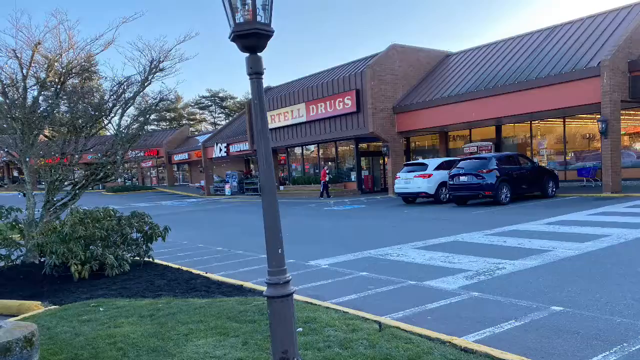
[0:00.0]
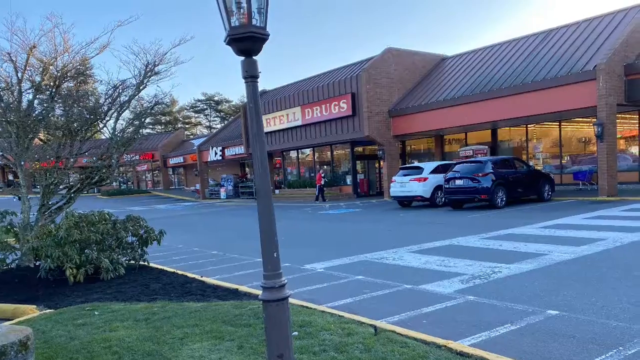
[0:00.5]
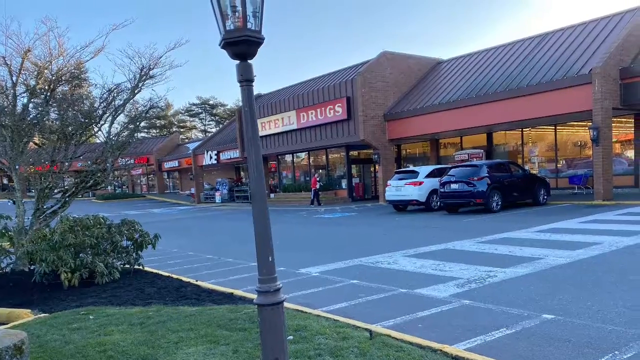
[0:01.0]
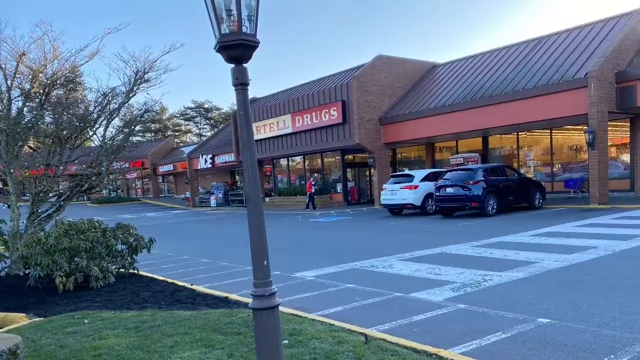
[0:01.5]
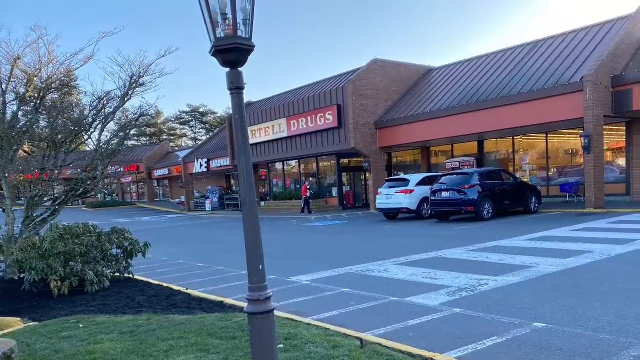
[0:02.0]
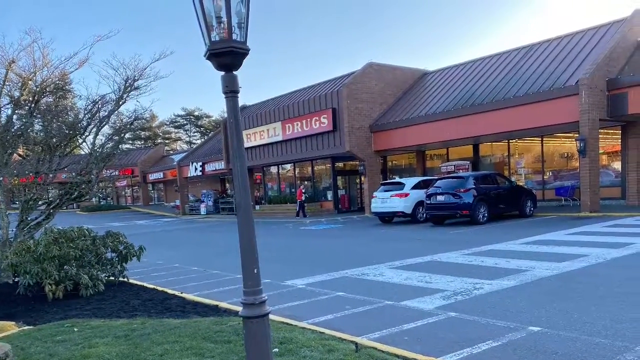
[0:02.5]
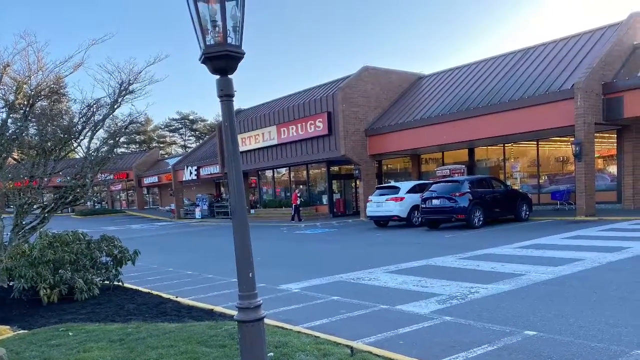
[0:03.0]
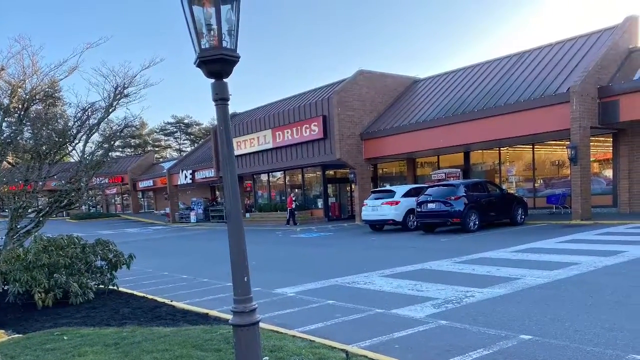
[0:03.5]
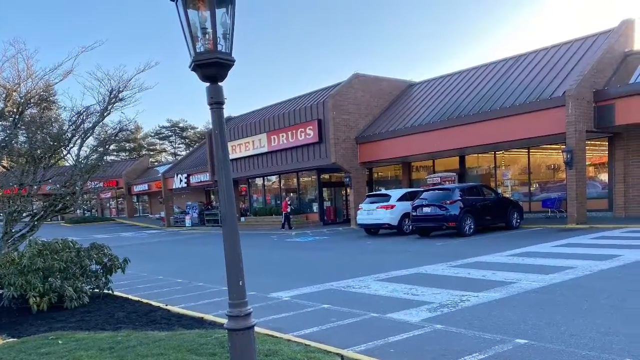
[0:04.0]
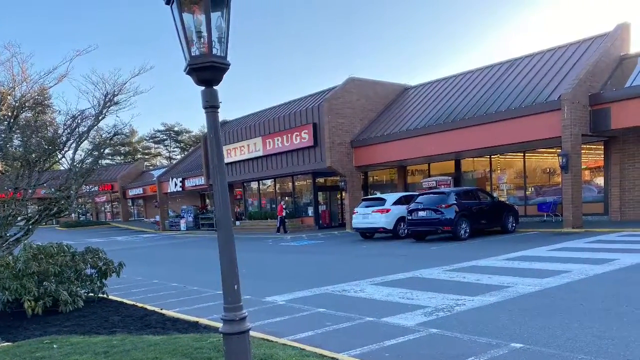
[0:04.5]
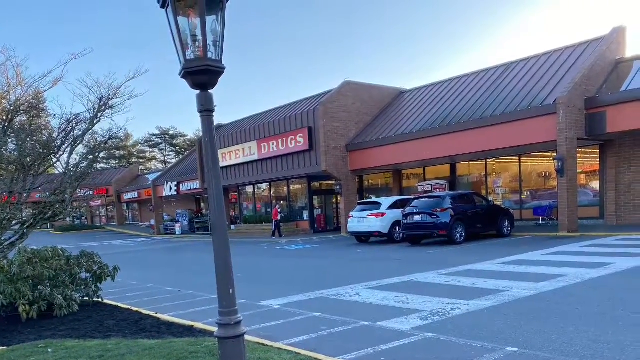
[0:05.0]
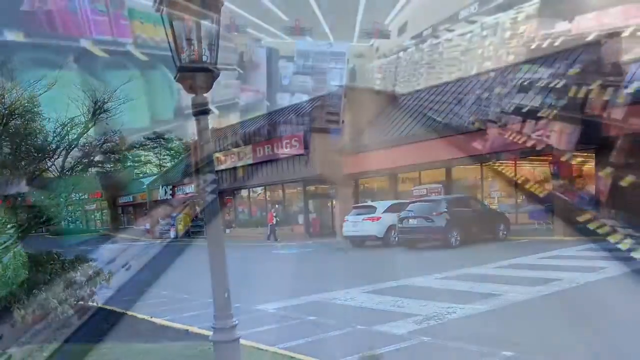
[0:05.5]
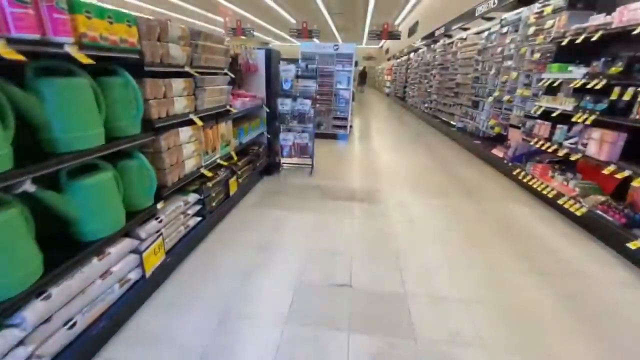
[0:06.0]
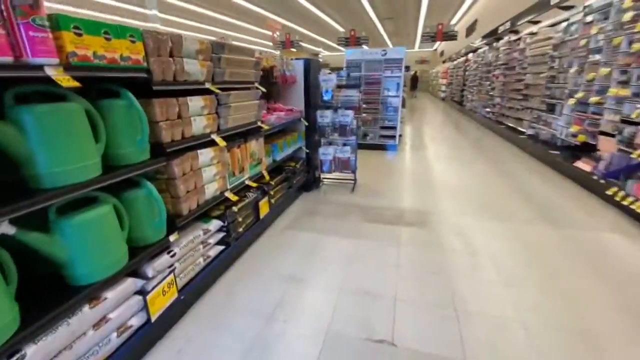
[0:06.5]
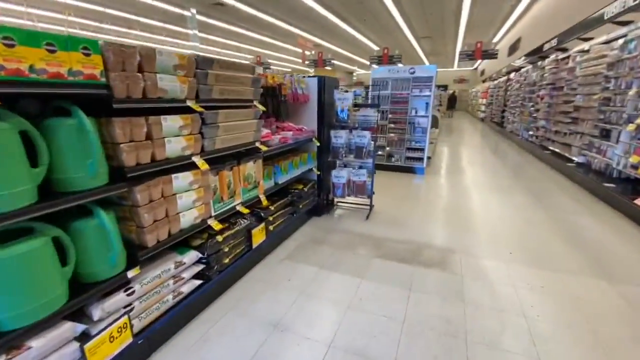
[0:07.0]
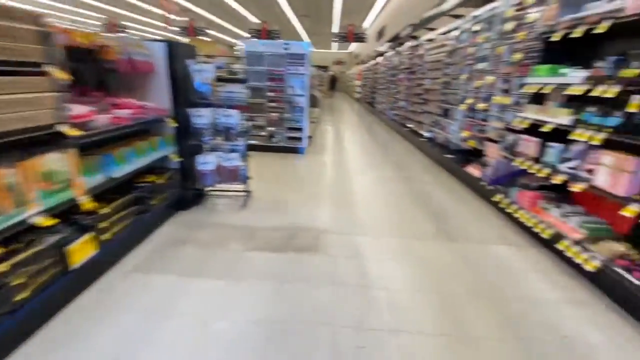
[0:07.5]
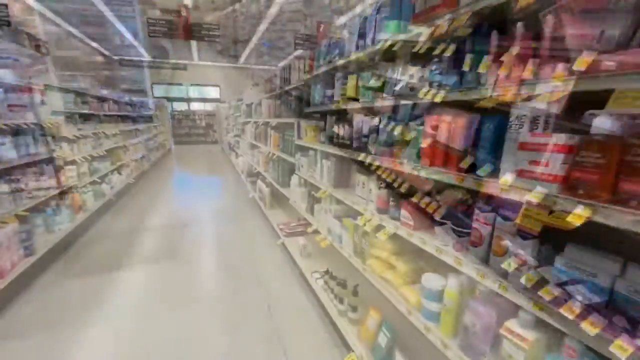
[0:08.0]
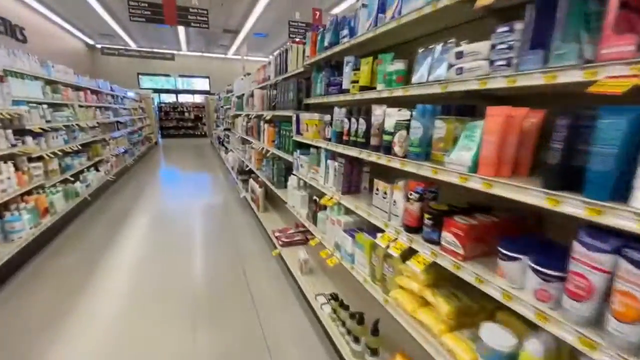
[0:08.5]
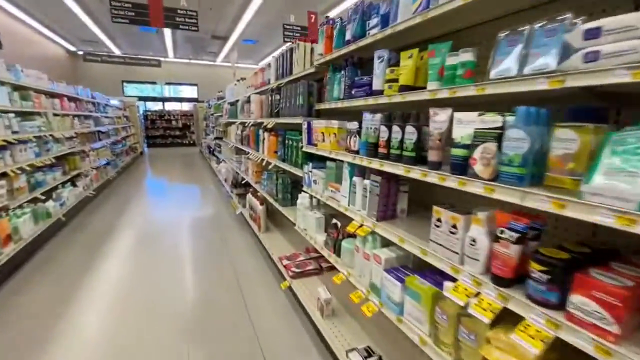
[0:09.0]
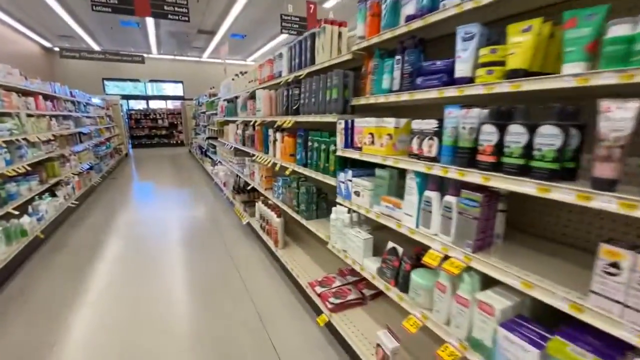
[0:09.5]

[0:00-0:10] The video opens with a shot of a strip mall, then moves inside a store, presumably one in that strip mall. A couple of cars are parked outside in front of what looks like a drugstore, though a light pole is in the way and the sign cannot be made out, so it is not clear whether it is a drugstore. Next to it is an Ace Hardware, and there is a crosswalk in front. Across the street there is a little landscaping where the light pole is. Inside the store, the camera goes down the aisles, which appear to hold a lot of shampoo and similar personal products.